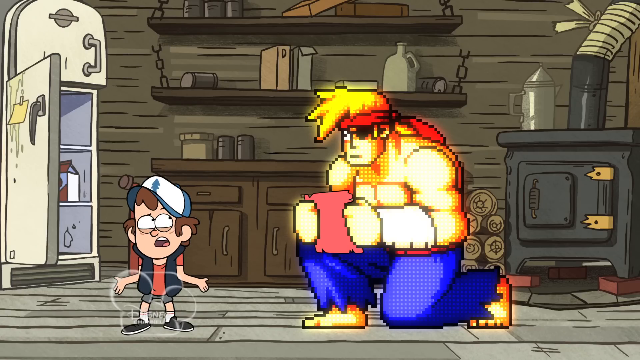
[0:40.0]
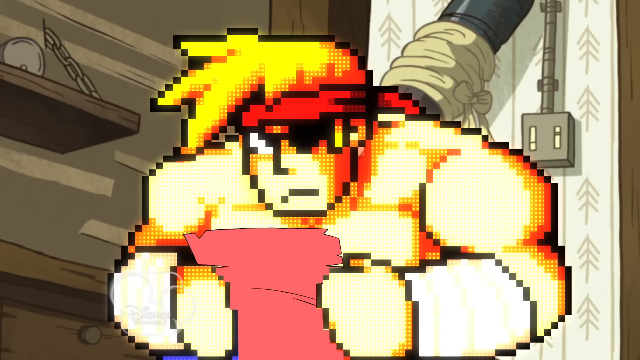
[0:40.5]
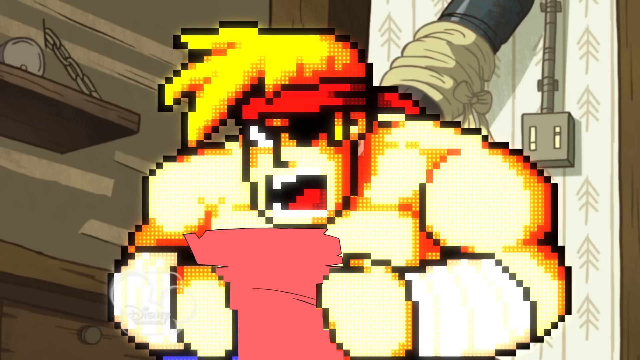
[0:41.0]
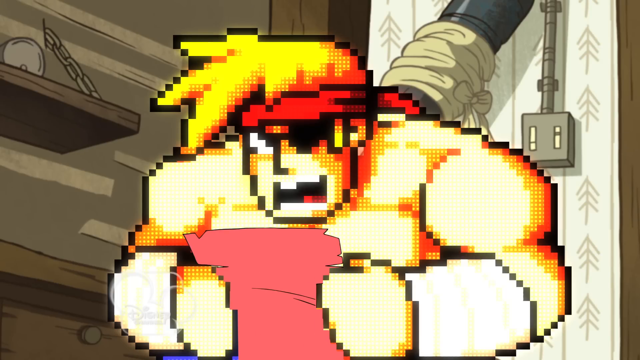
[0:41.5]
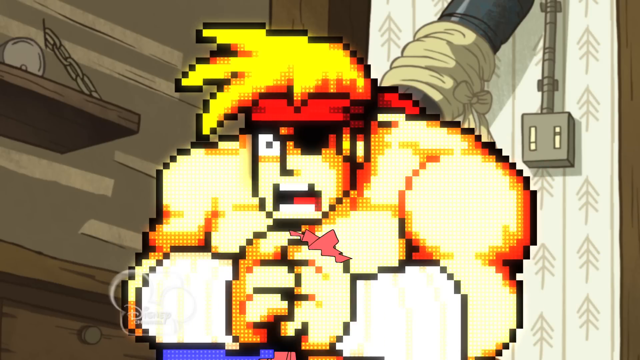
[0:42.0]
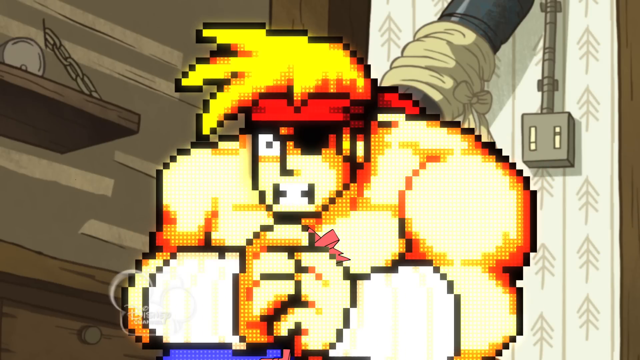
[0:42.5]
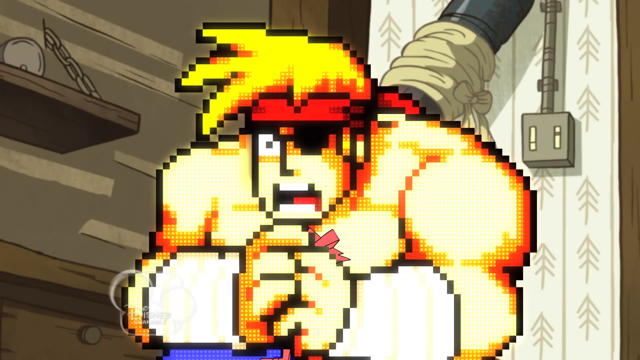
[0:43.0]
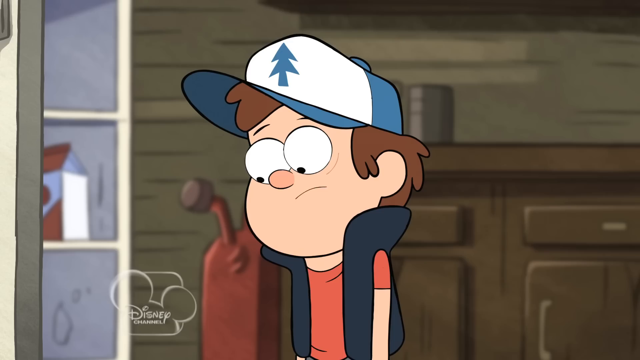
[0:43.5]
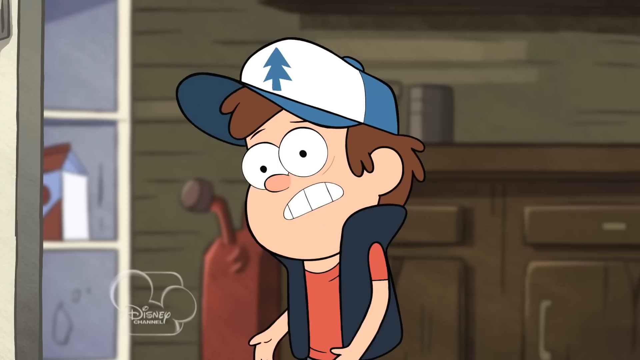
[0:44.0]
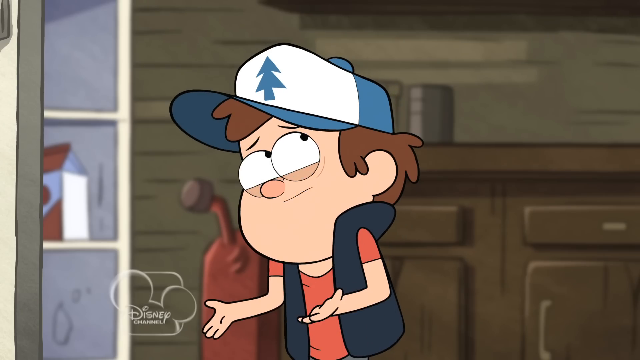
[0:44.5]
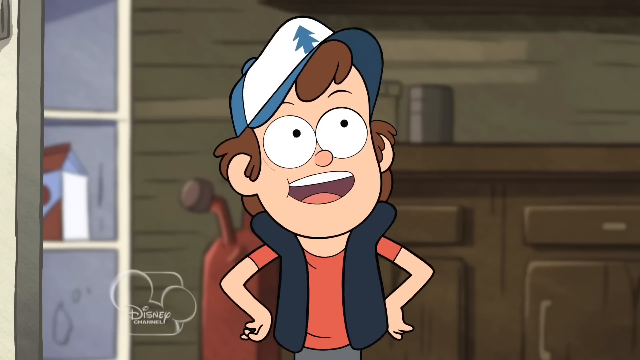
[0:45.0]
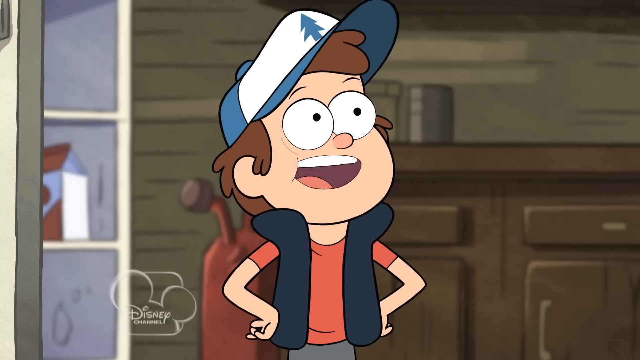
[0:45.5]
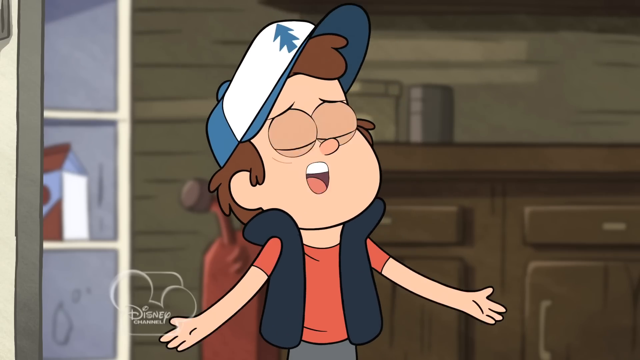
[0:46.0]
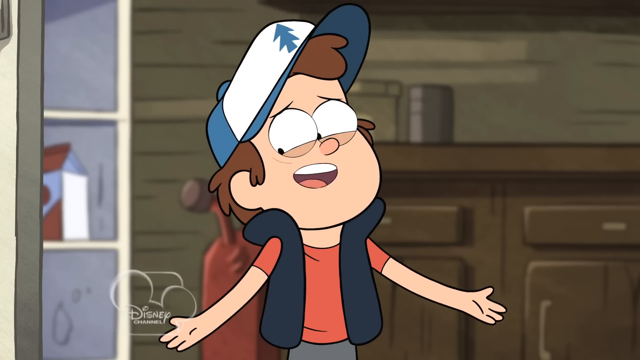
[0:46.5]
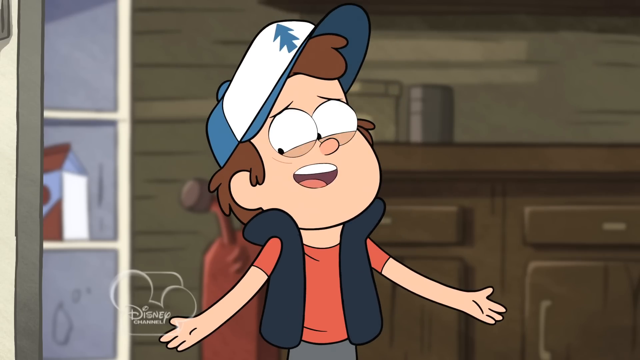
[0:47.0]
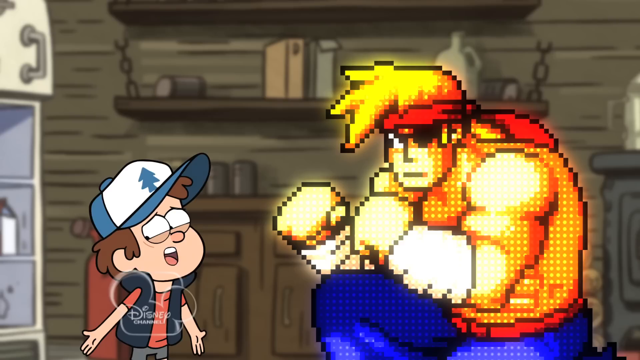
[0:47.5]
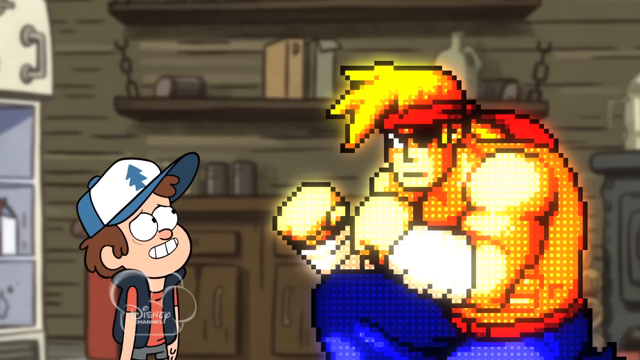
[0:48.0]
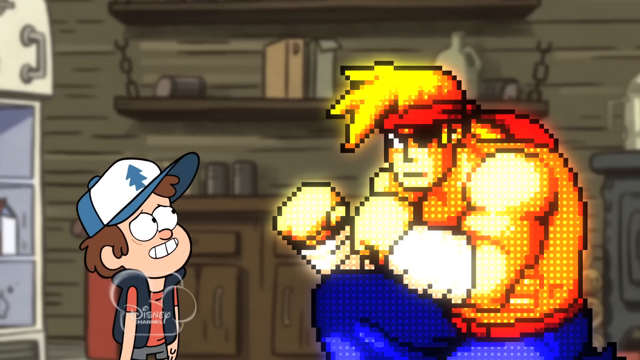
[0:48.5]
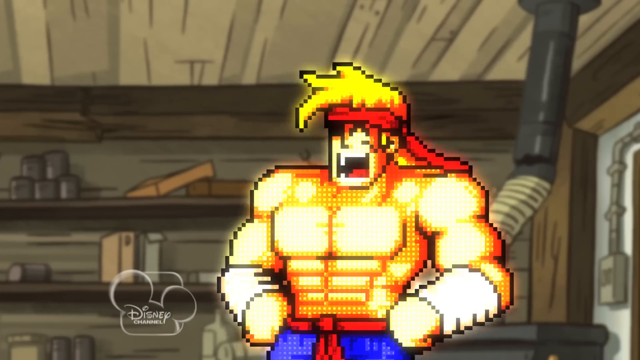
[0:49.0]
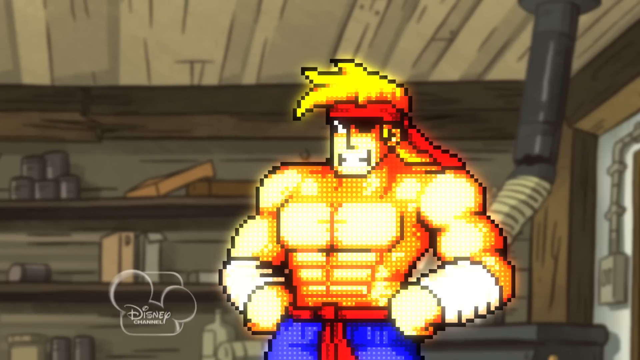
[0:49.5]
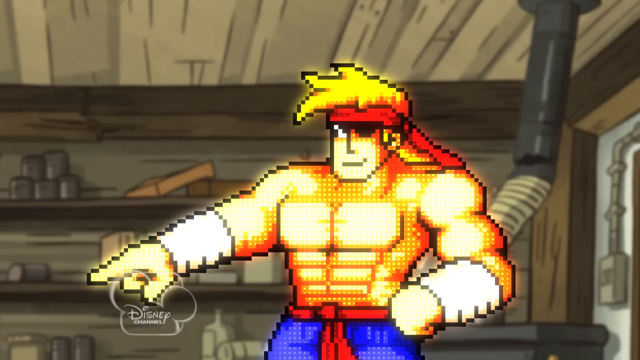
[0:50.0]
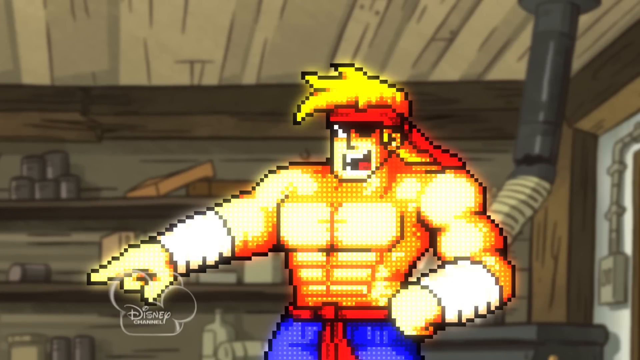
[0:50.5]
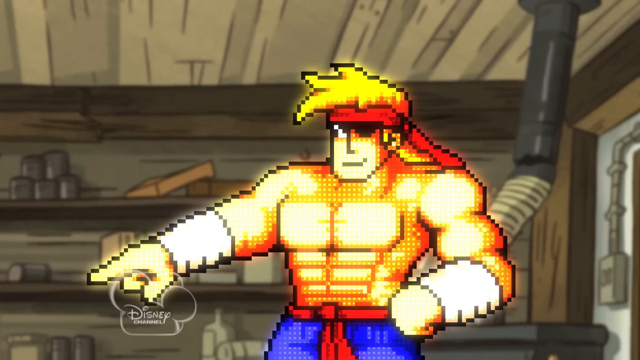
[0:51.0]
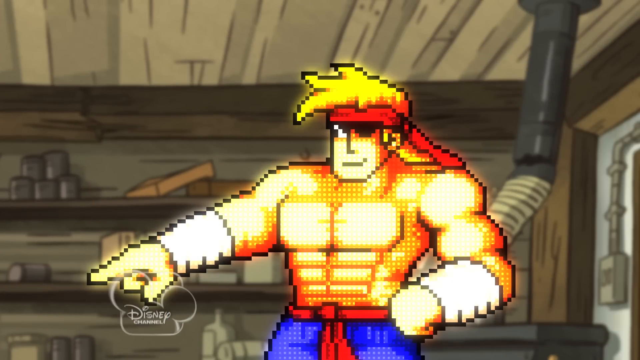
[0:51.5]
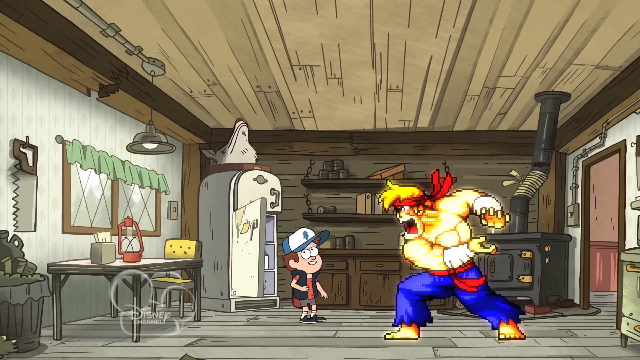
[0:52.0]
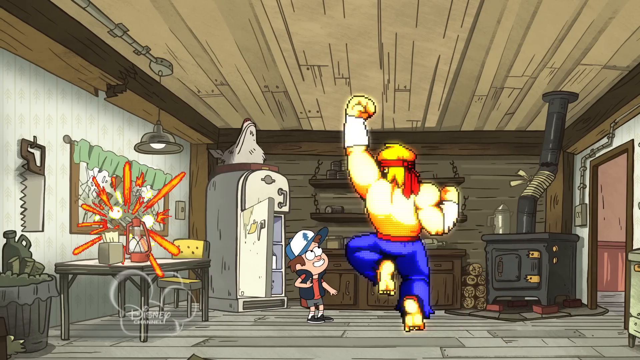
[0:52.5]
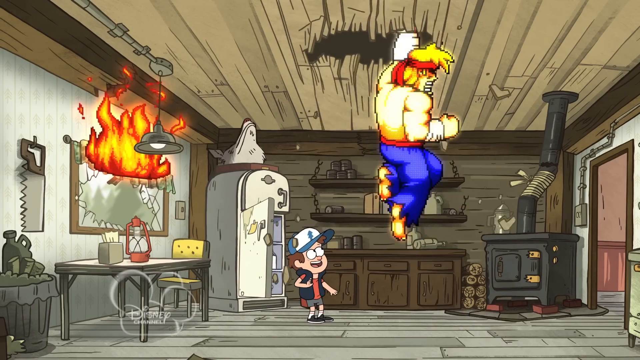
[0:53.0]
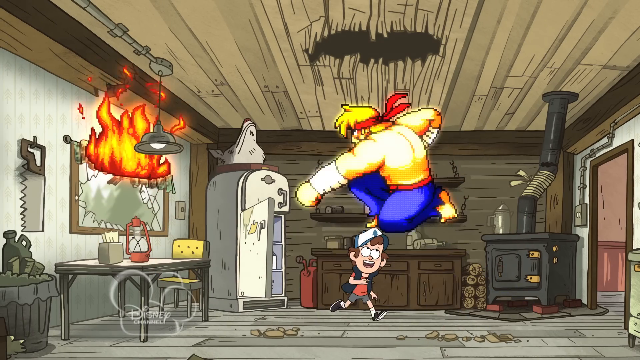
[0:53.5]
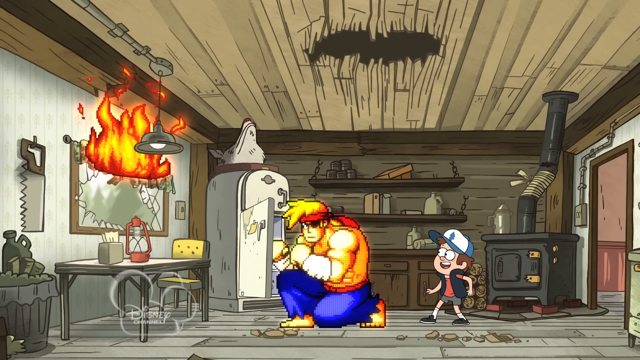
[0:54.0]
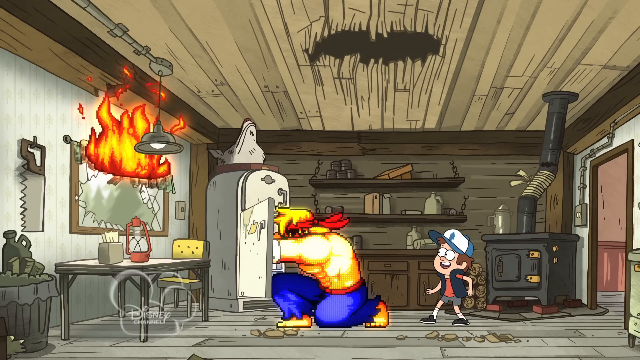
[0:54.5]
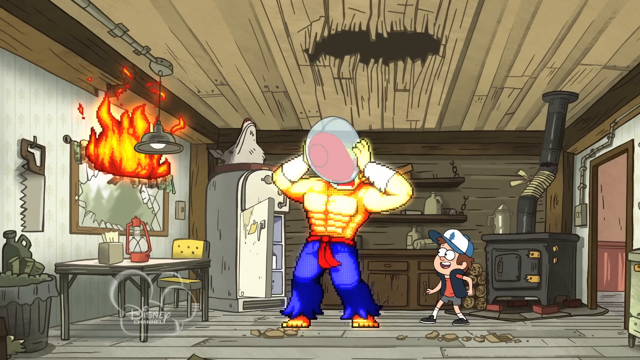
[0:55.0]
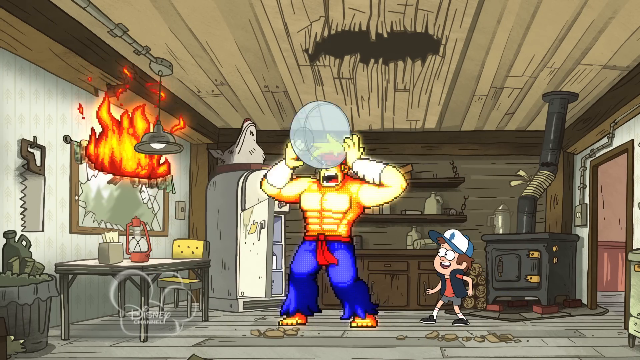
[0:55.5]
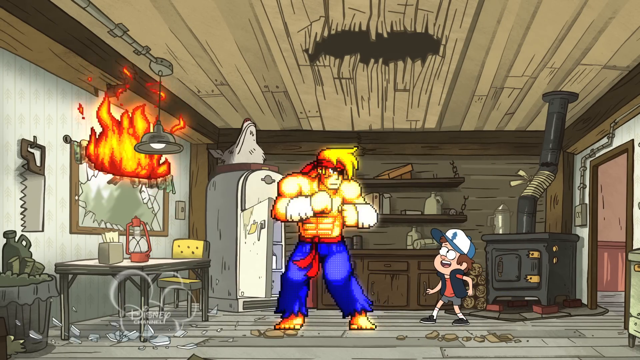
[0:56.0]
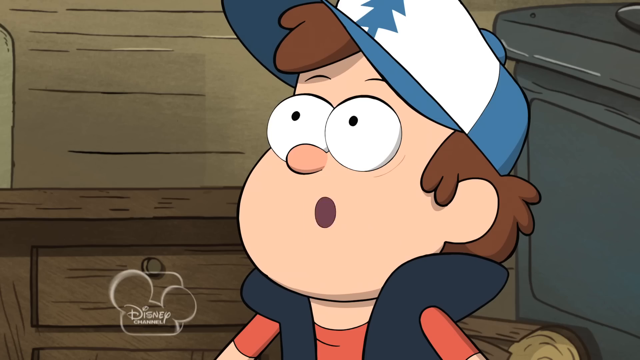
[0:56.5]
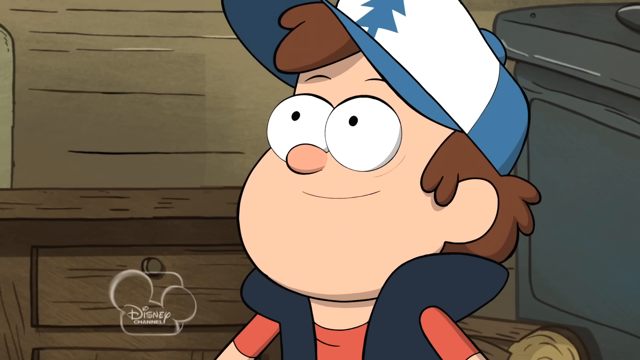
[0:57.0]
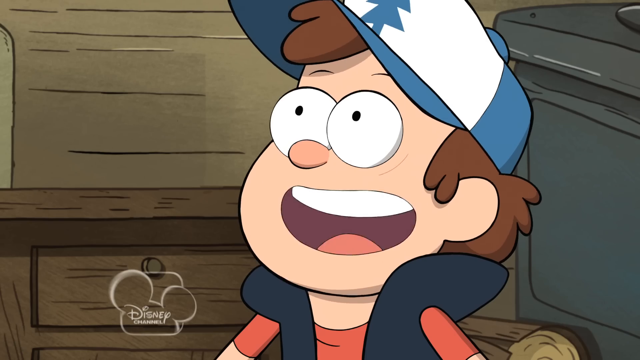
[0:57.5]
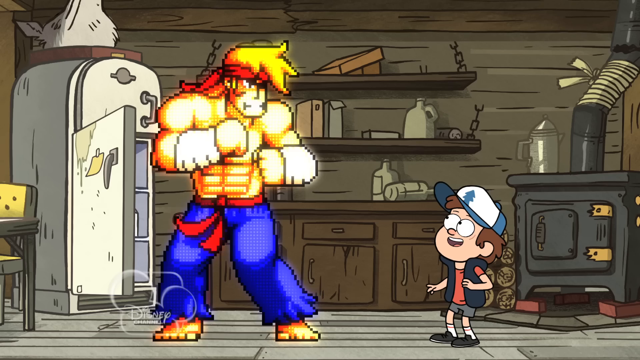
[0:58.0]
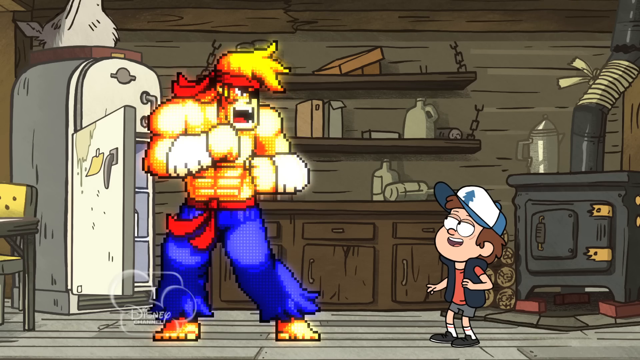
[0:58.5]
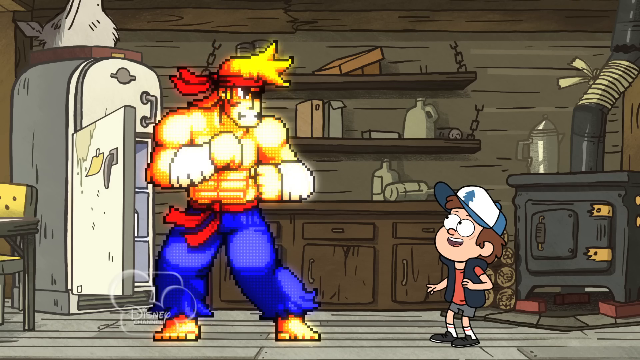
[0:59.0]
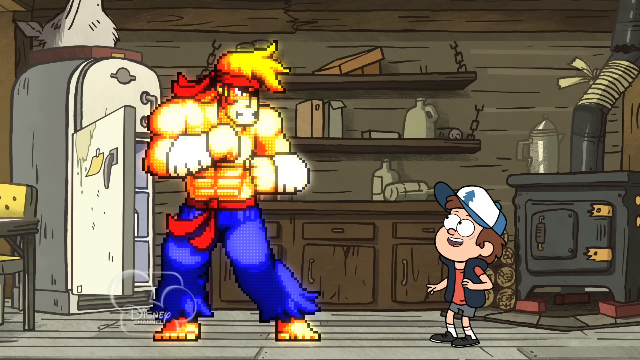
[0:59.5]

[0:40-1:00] In a cabin, a Street Fighter character holds a red piece of paper while a little boy stands next to him with his arms spread out, talking as if trying to convince him to do something. After the boy says something with his arms spread out, the Street Fighter character laughs at him. The Street Fighter character then throws a ball of flame at the wall, and the wall burns. He reaches into the refrigerator, grabs a big bowl of punch, drinks the entire bowl, and turns around bouncing with his fists up. The little boy looks up at him with his arms in front of him, maybe shocked, as the conversation continues. The room has a cast iron stove with a stack of firewood next to it, the refrigerator to the left, shelves on the back wall and shelves mounted up on the wall, and walls and a ceiling all of wood, looking like a wooden cabin out in the forest.